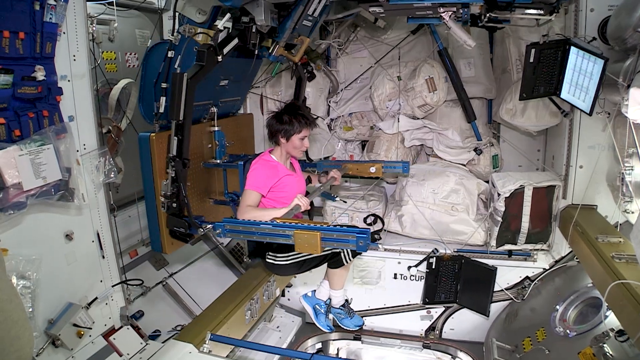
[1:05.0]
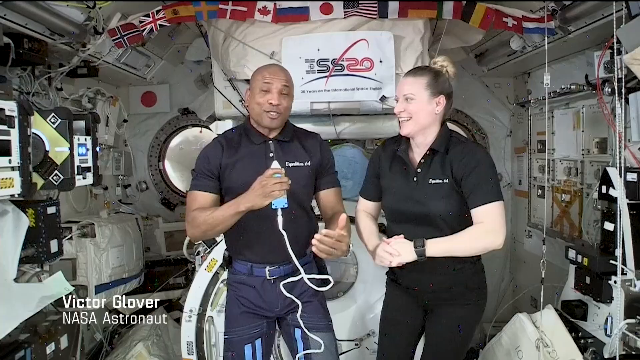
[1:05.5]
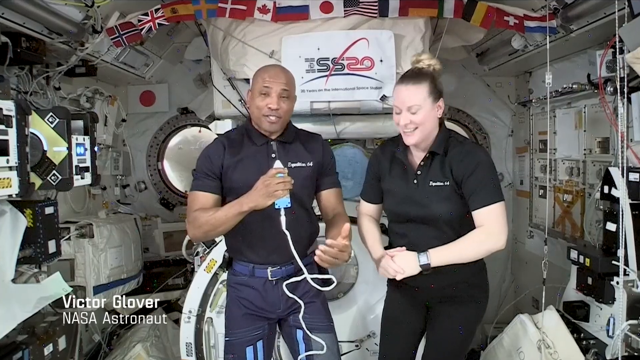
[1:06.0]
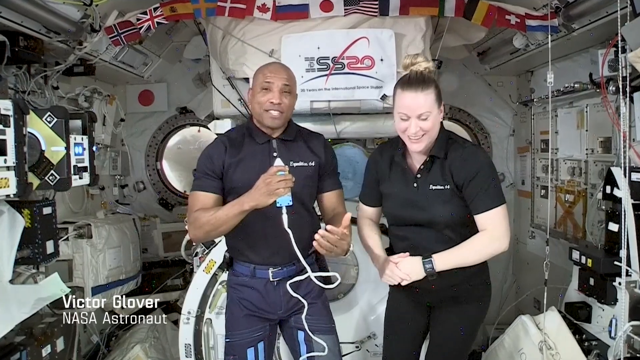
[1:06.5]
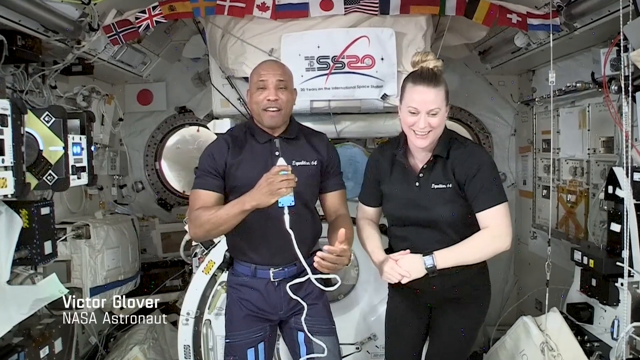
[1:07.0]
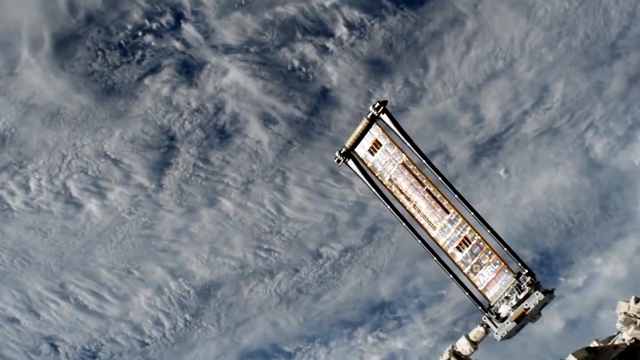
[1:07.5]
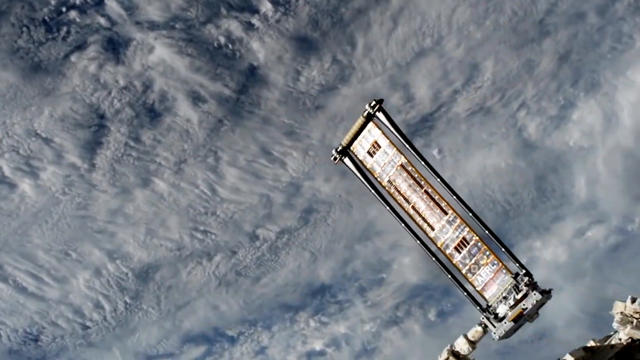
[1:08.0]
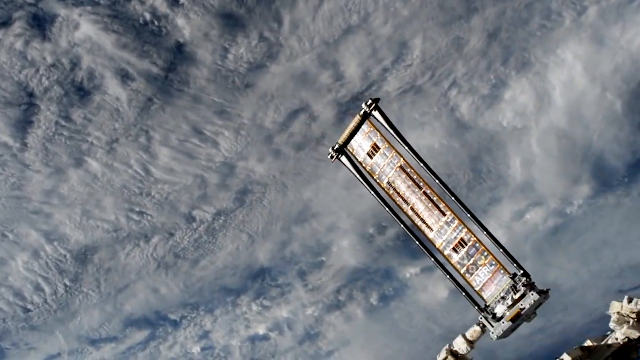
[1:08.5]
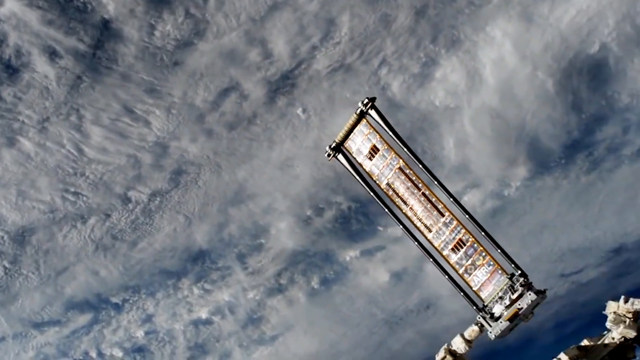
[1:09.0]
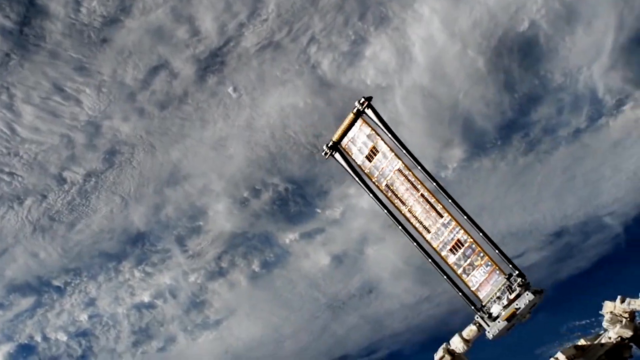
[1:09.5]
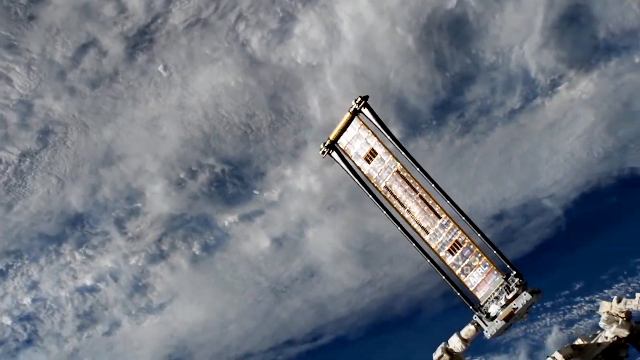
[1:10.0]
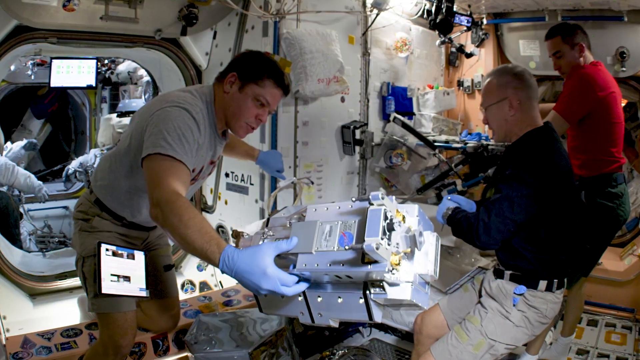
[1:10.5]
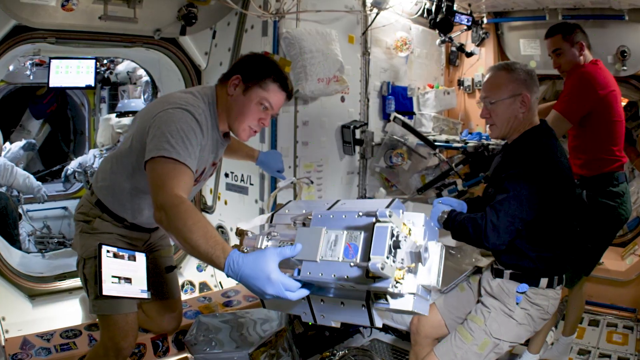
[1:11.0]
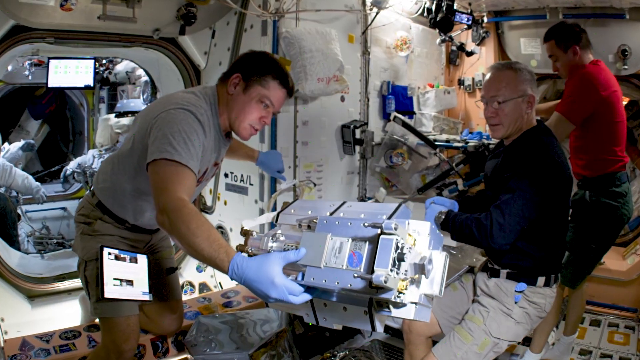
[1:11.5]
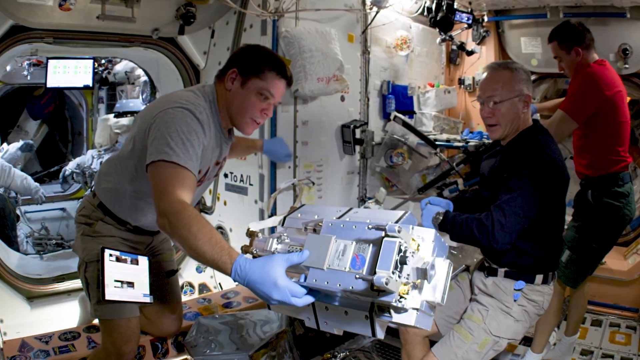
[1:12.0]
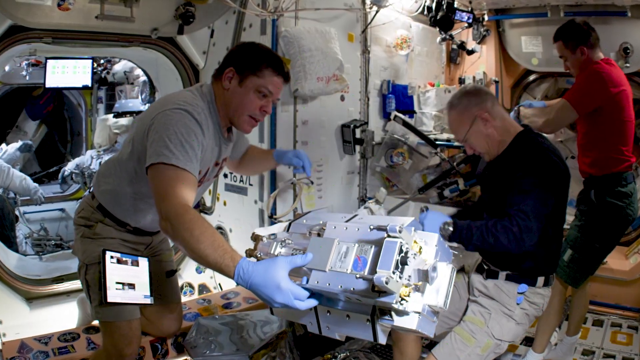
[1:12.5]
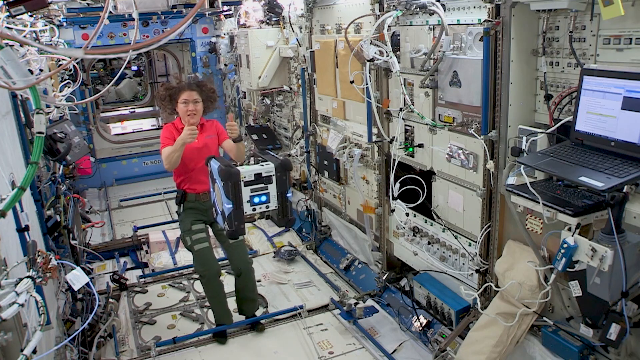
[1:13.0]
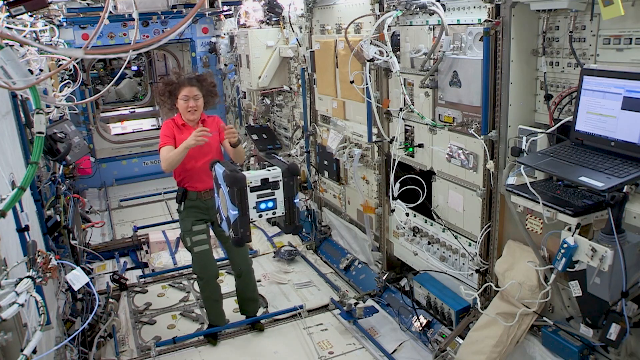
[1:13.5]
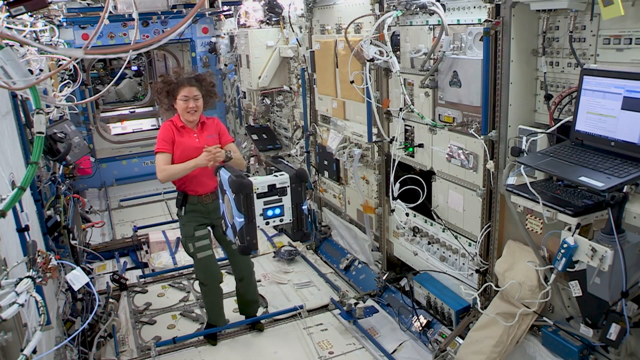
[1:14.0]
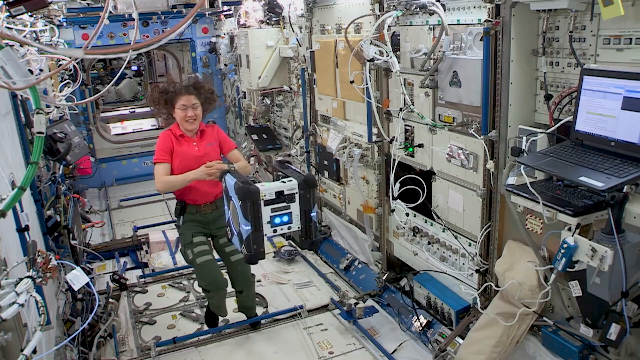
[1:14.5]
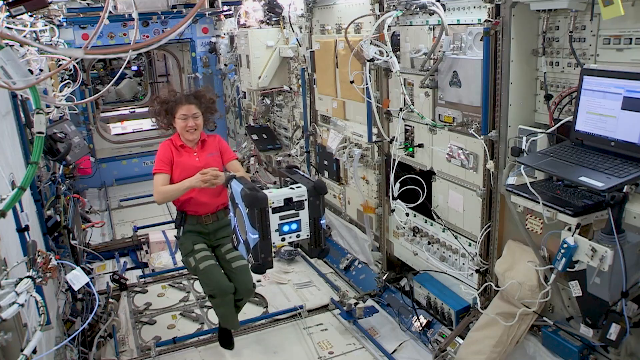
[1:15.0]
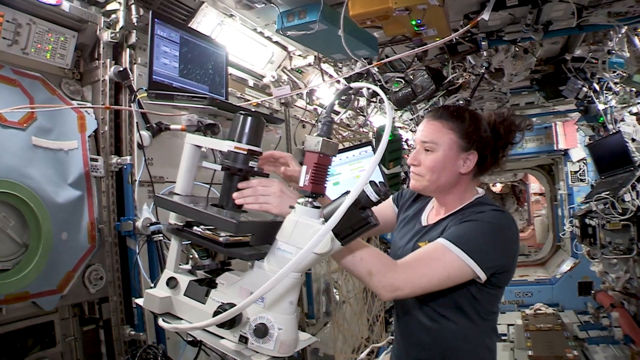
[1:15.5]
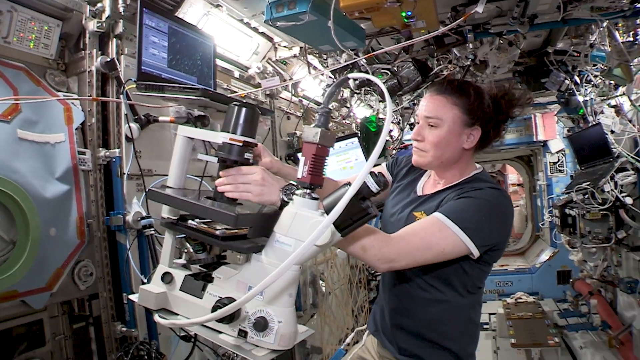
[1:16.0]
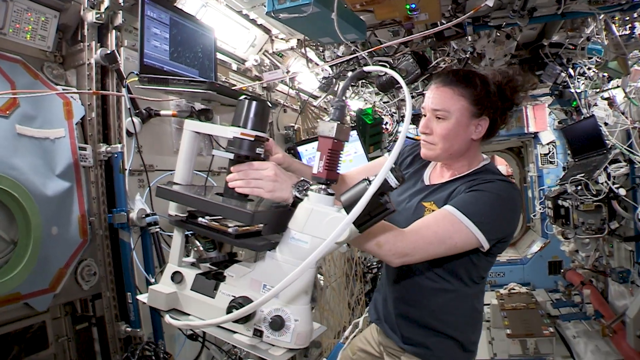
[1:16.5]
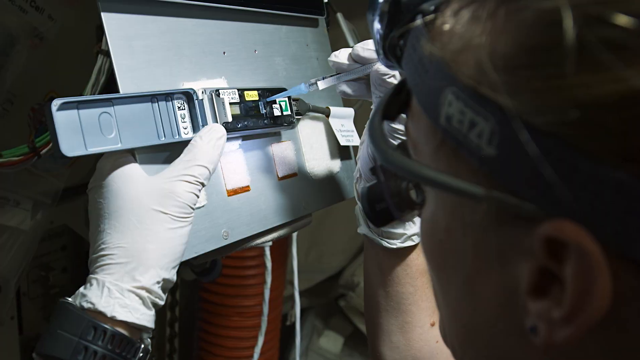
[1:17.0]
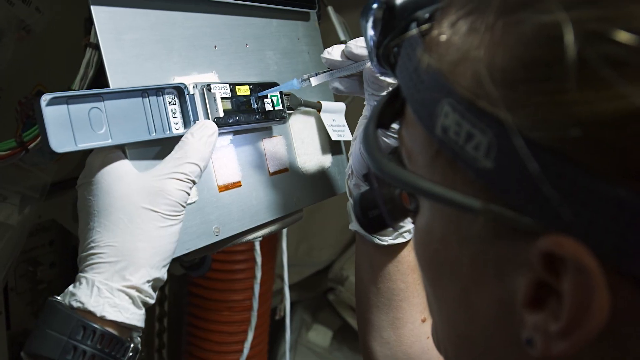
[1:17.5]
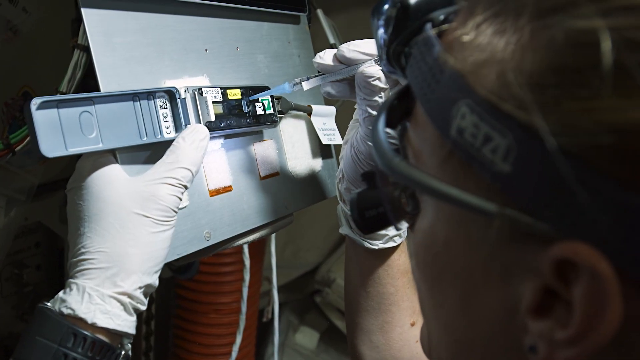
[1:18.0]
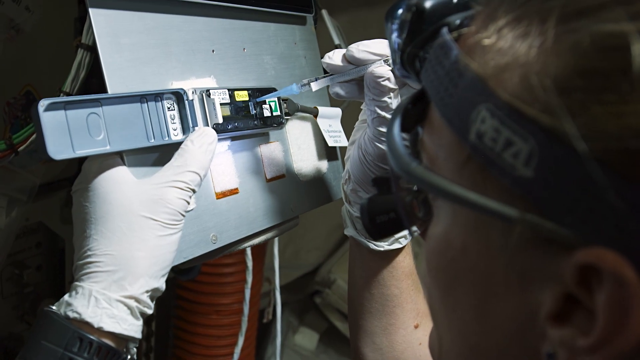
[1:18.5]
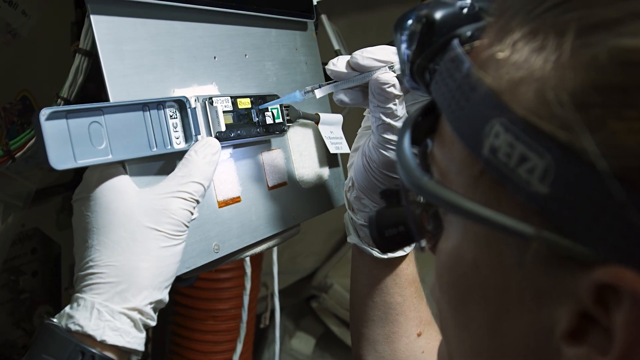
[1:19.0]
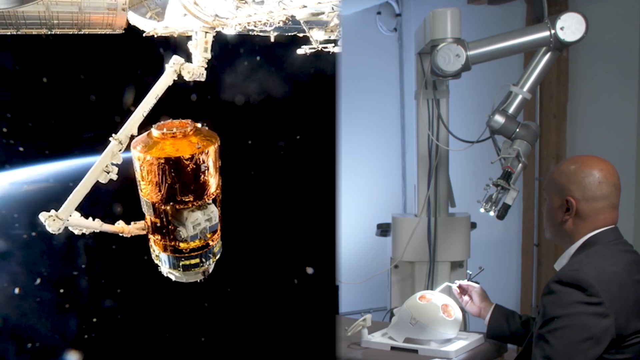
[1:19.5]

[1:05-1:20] An interview-style setting inside the space station opens this section, with various international flags behind two astronauts who stand together, one holding a microphone. A young man named Victor Glover, as the screen says, talks to a young woman in a black polo-style shirt whose name is not listed; they joke and laugh. Next comes imagery of the space station outside, viewed down toward Earth, with an expanding piece of equipment coming off it. A group of three men work on an experiment and hand items between them. A young woman in a red shirt demonstrates zero gravity as a piece of equipment floats away from her. Then a person uses and demonstrates a microscope mounted to a heavier piece of equipment on the side wall.